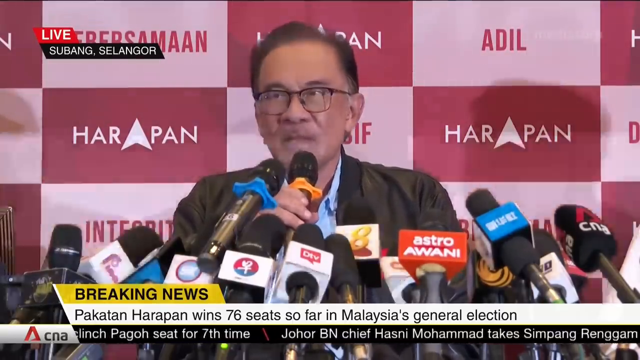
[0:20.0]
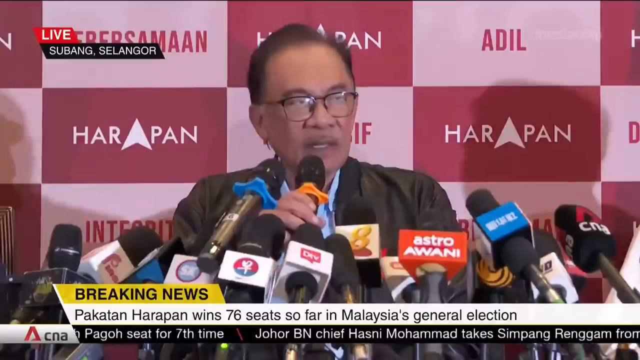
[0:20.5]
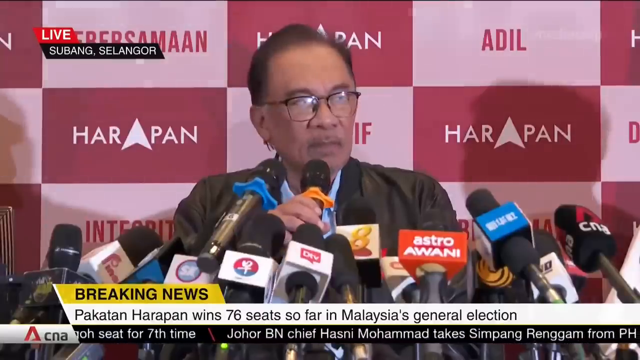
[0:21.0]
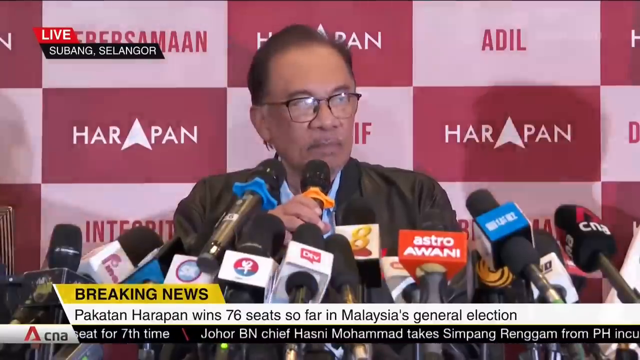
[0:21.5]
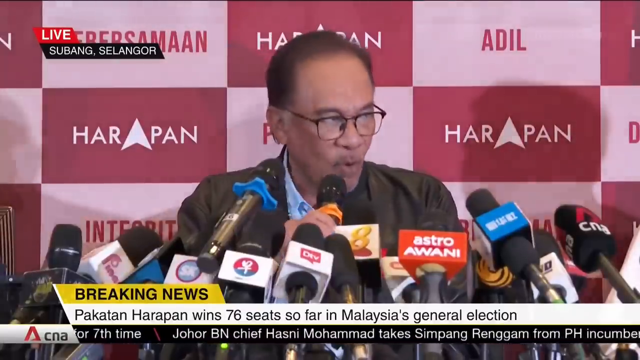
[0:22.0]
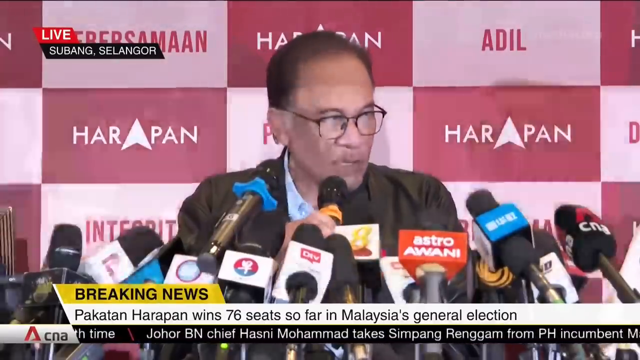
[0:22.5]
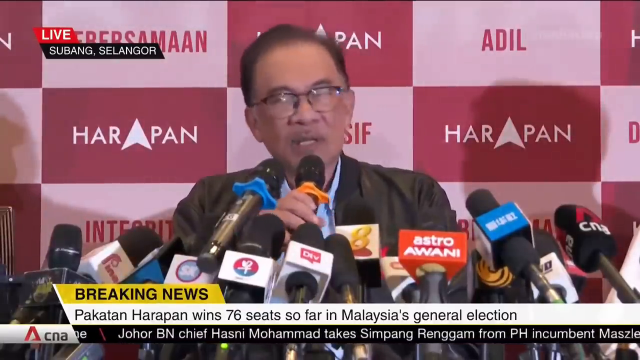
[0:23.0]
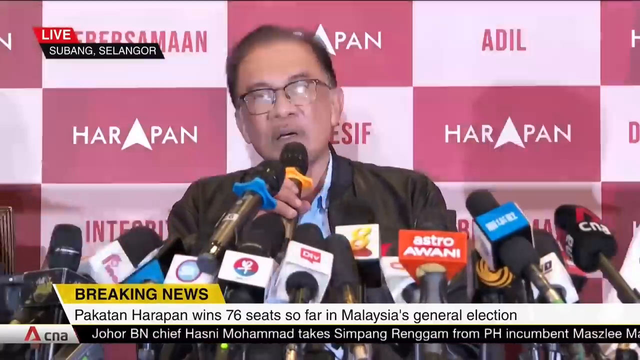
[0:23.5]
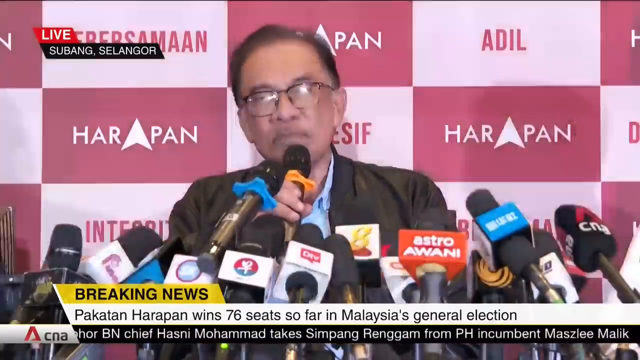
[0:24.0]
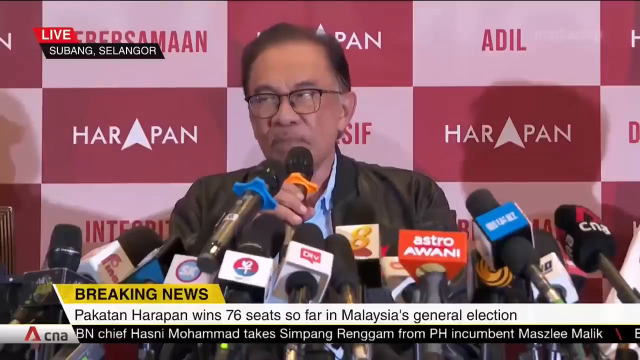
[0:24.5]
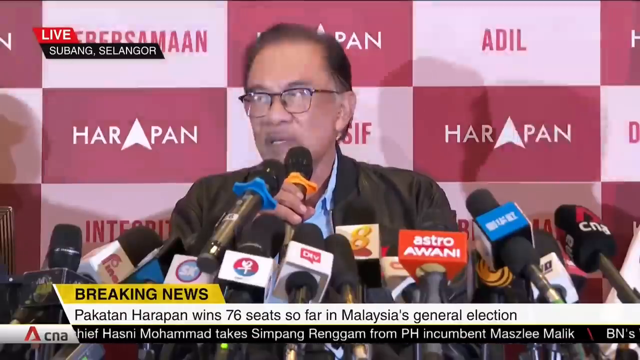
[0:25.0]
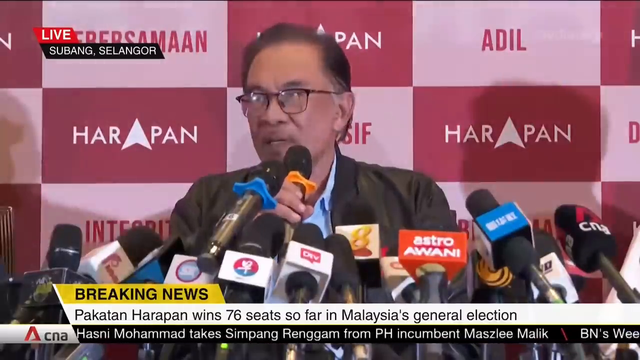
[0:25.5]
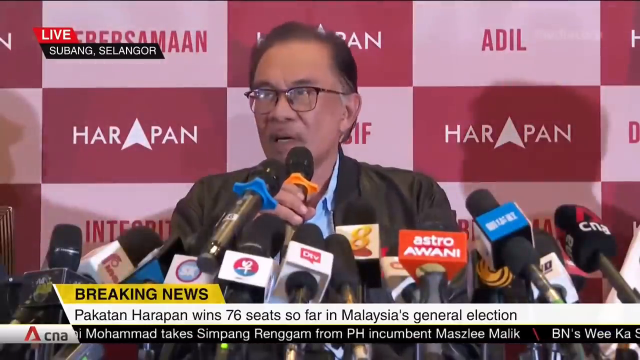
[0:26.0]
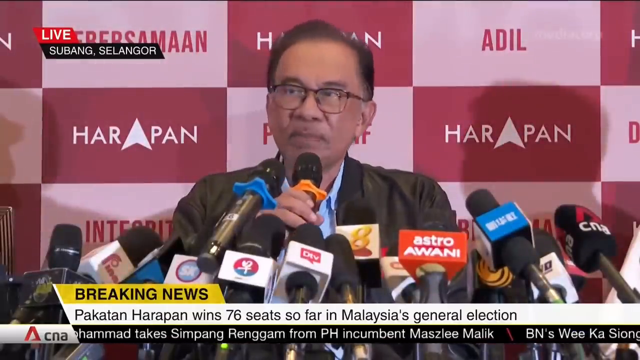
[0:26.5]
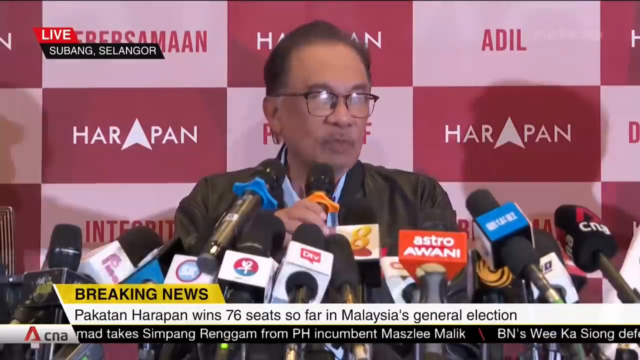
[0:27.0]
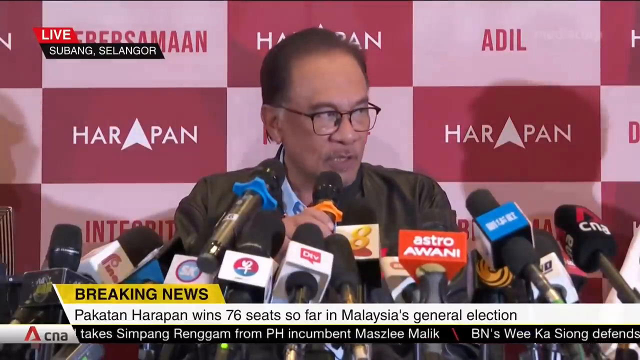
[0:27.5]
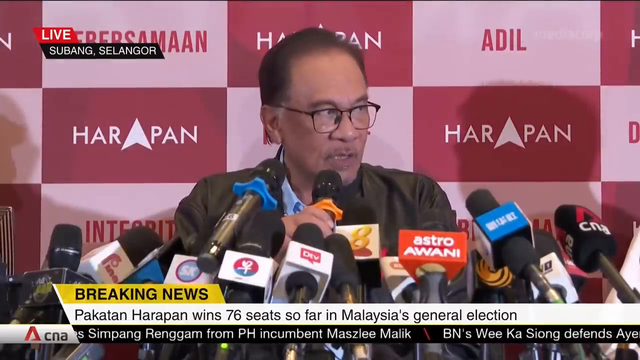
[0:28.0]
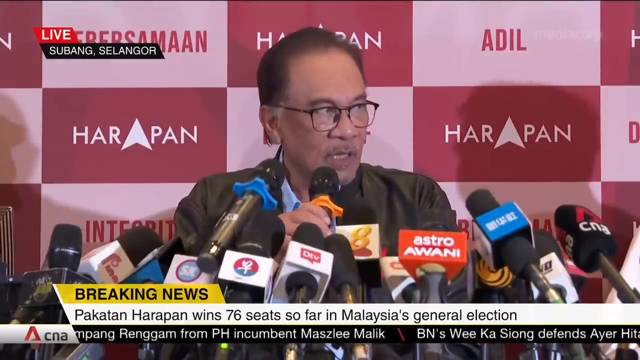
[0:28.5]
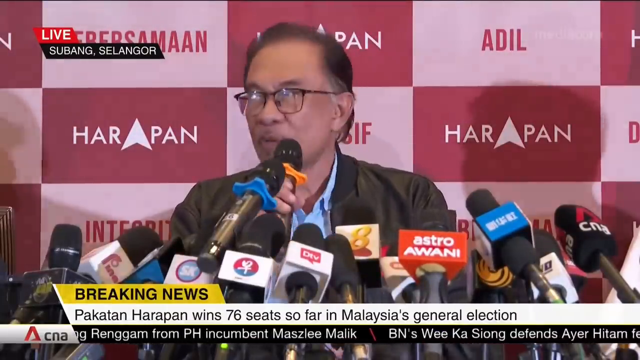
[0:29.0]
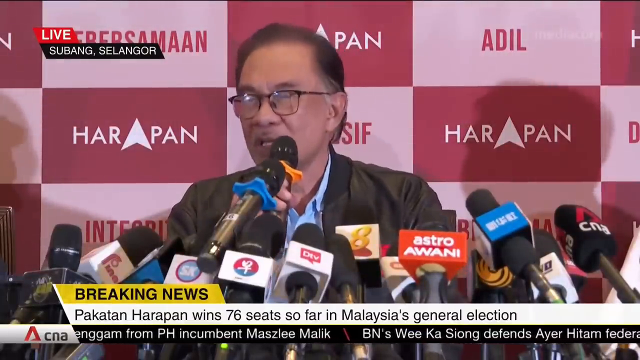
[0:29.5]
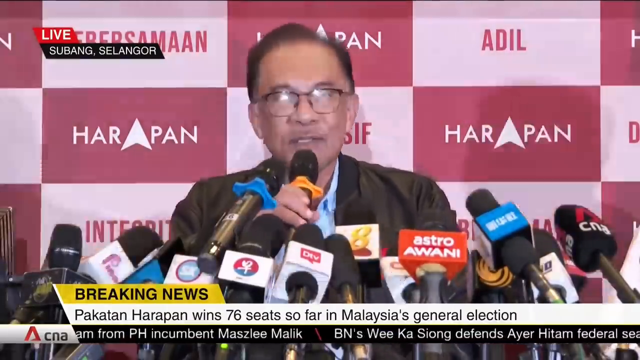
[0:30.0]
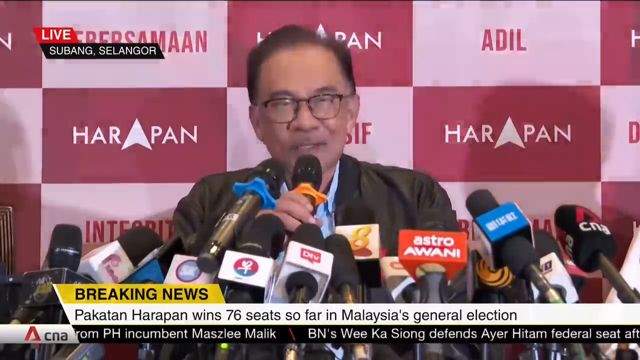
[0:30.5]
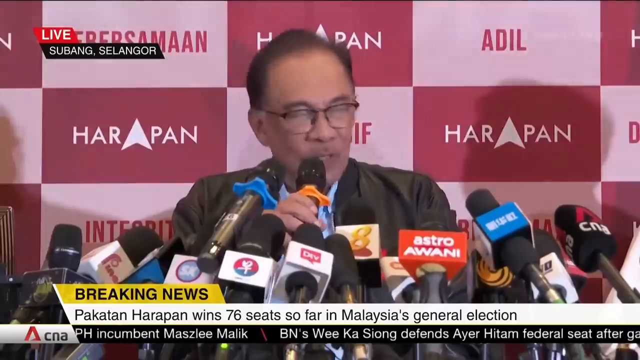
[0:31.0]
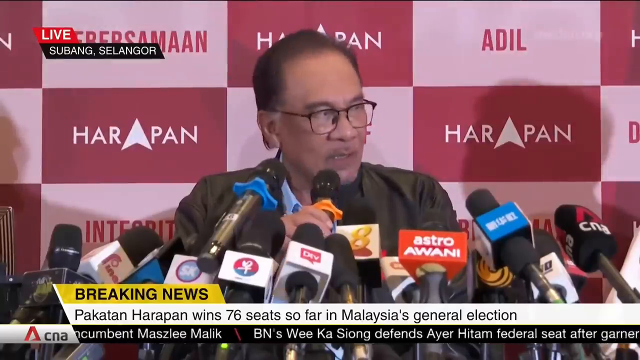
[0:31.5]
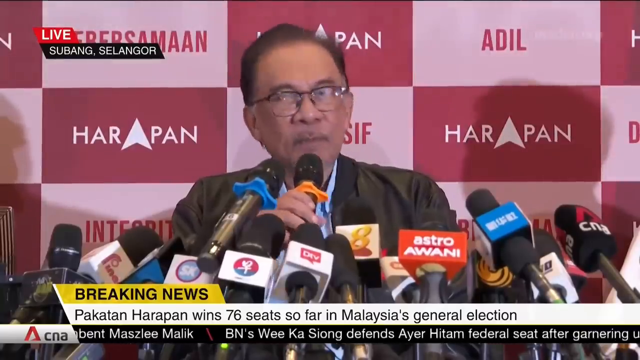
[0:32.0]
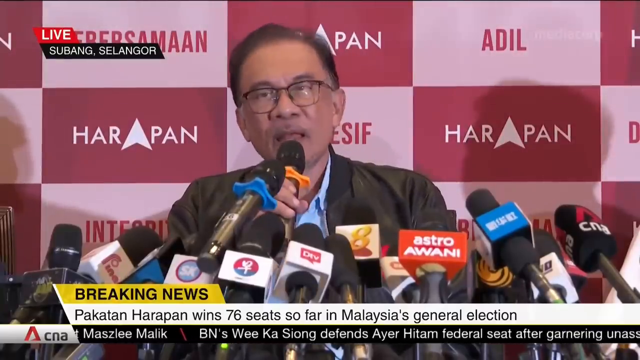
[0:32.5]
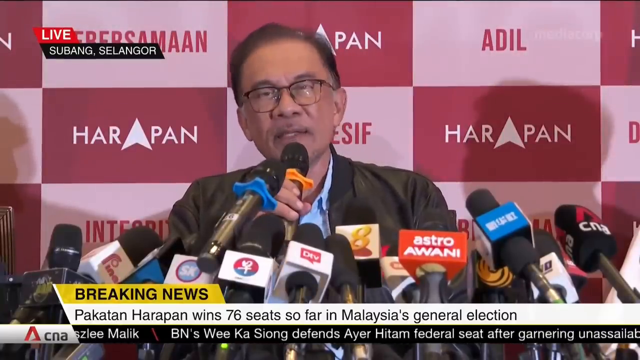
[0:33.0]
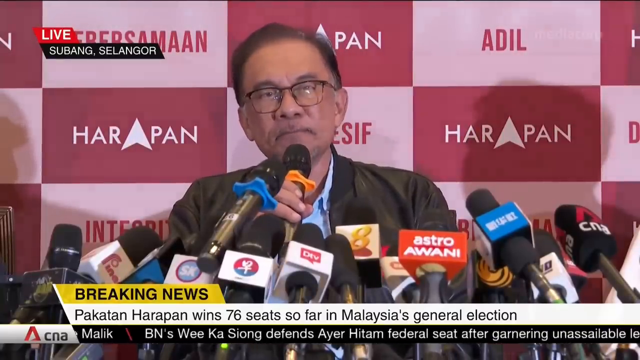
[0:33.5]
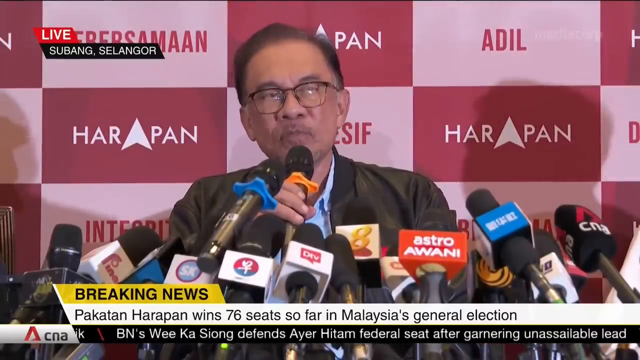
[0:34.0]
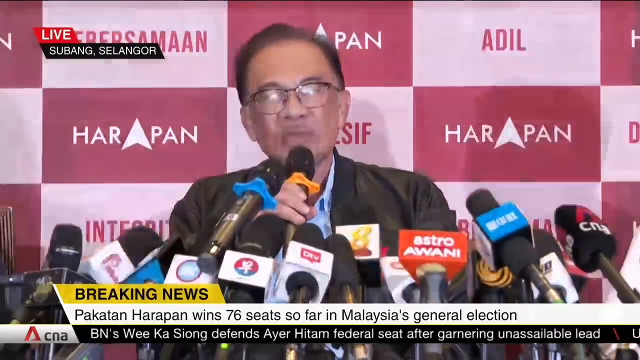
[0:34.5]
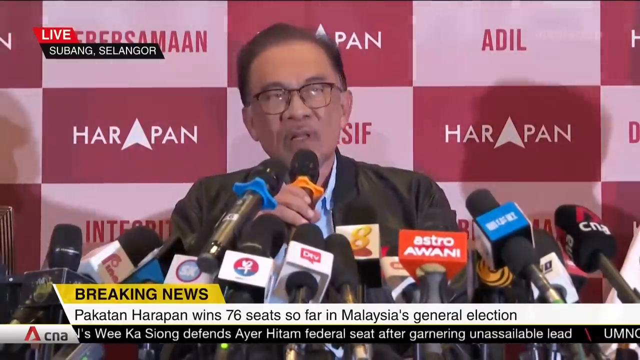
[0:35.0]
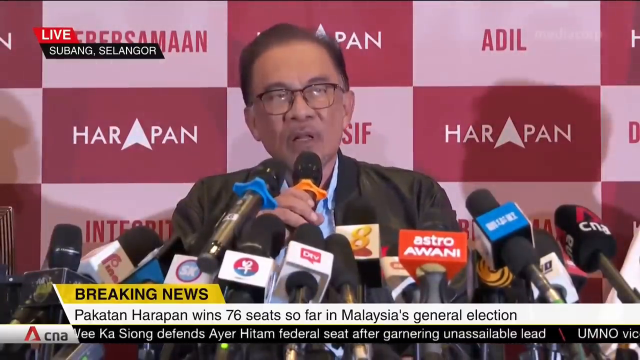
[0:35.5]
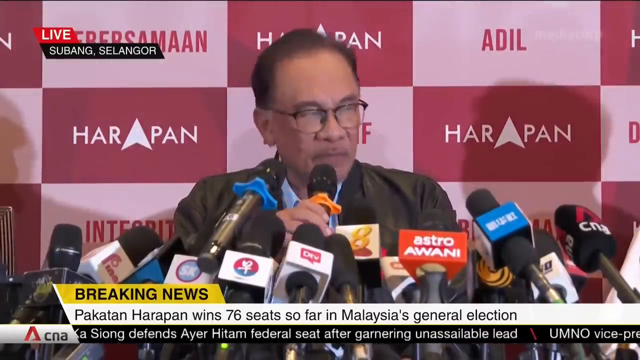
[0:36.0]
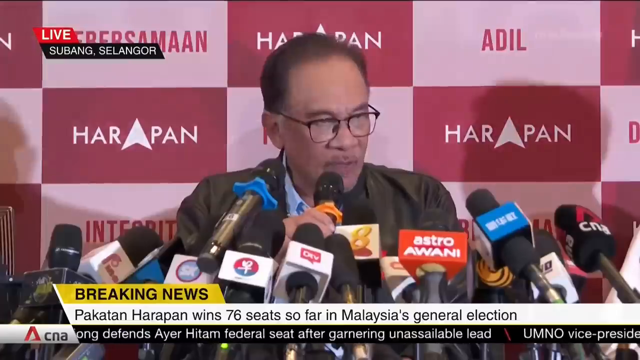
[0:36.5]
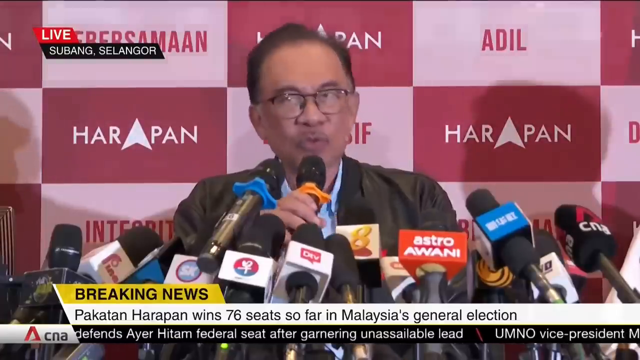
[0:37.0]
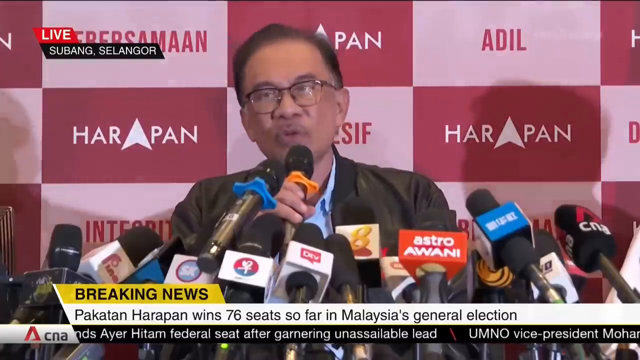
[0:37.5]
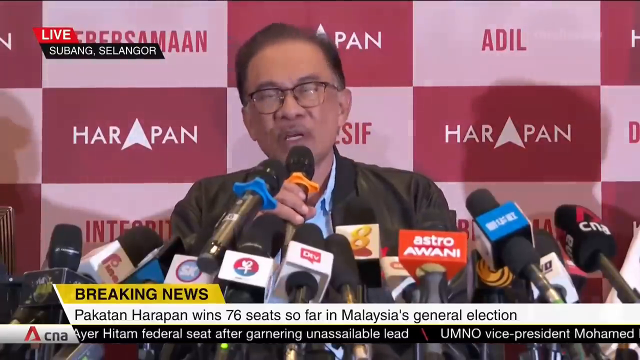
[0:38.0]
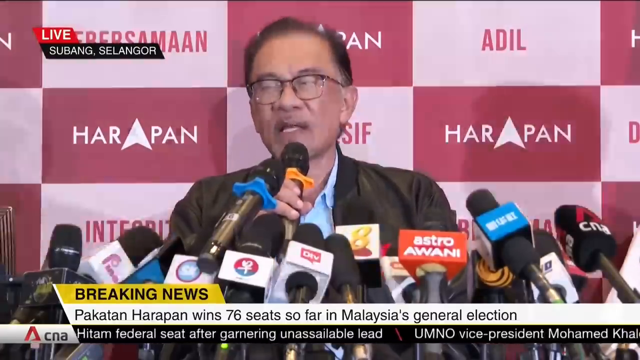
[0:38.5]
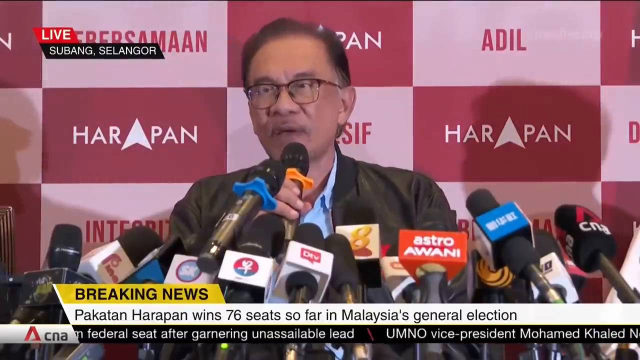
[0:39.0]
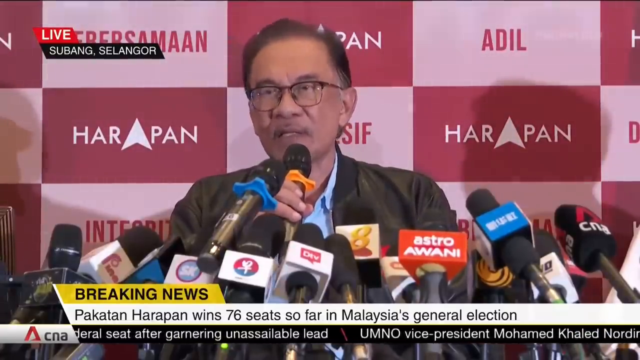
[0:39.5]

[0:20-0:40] The live breaking news broadcast continues with the banner "Pakatan Harapan wins 76 seats so far in Malaysia's general election." A news scroll runs along the bottom, showing an item beginning "BN's Wee Kay Sun defends" and then "UMNO Vice President Mohamed Khalid," where the scroll stops moving. A gentleman stands in front of probably 12 microphones from various outlets. A "live" watermark is visible, along with the location Subang Selangor, apparently in Malaysia.